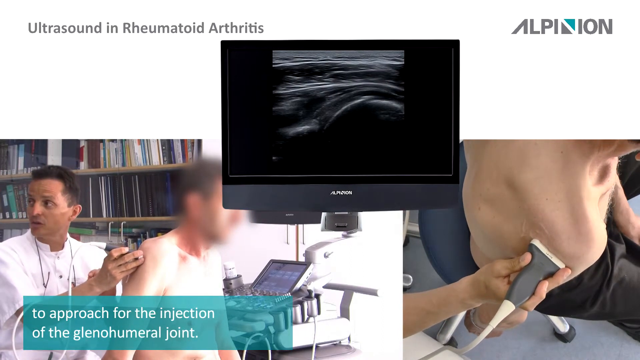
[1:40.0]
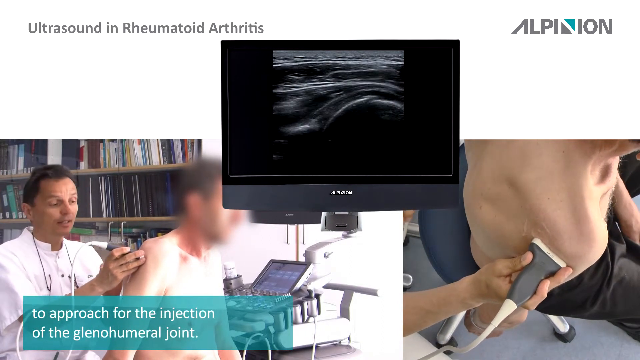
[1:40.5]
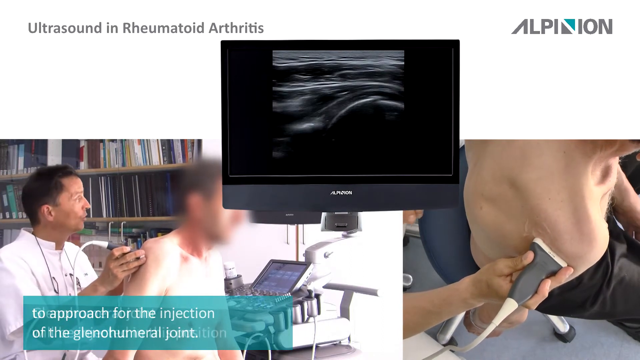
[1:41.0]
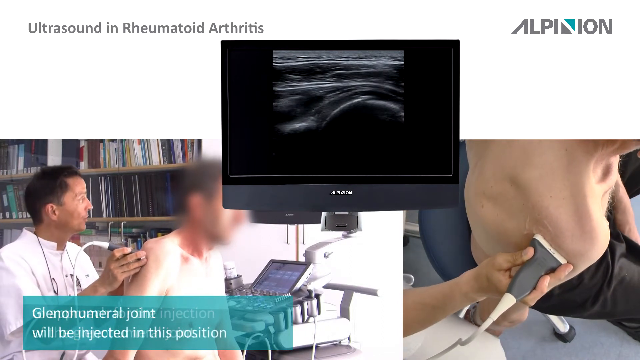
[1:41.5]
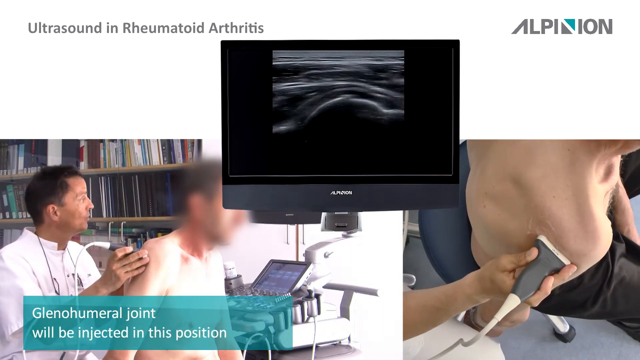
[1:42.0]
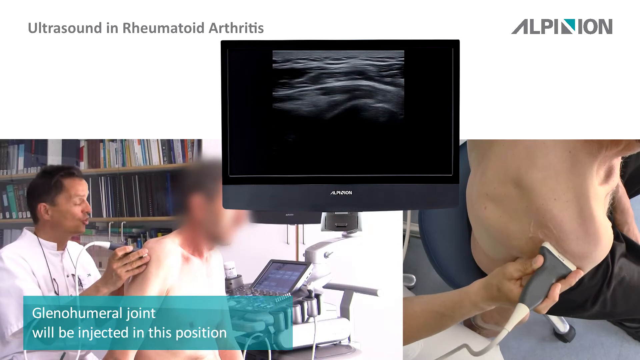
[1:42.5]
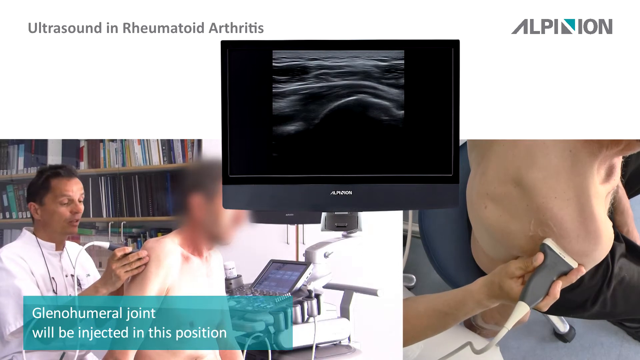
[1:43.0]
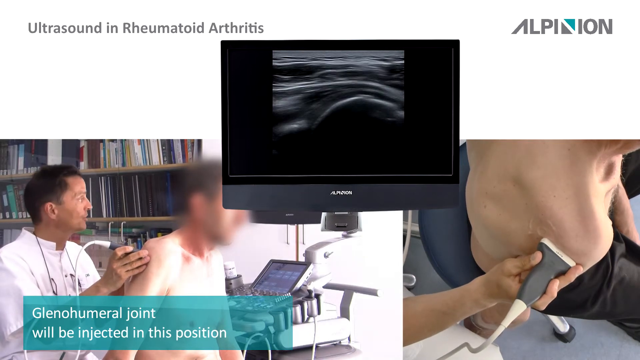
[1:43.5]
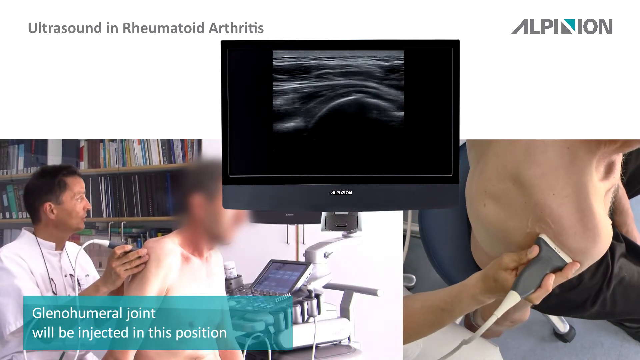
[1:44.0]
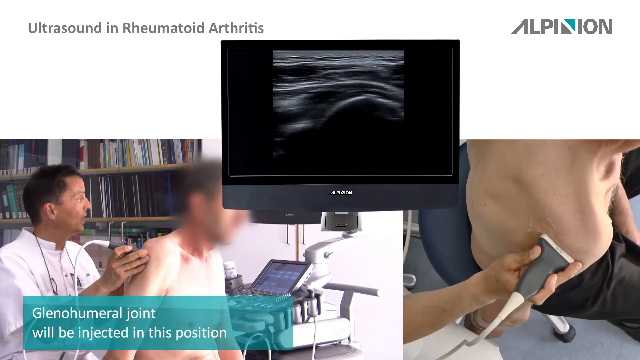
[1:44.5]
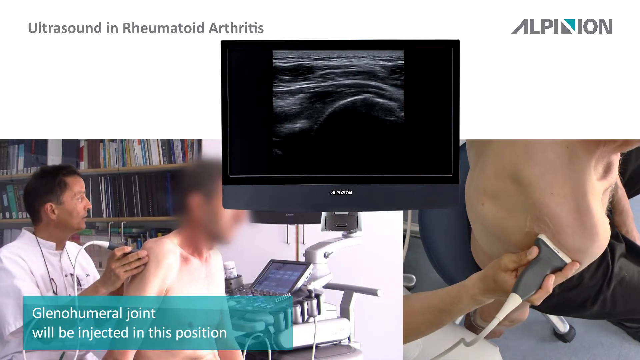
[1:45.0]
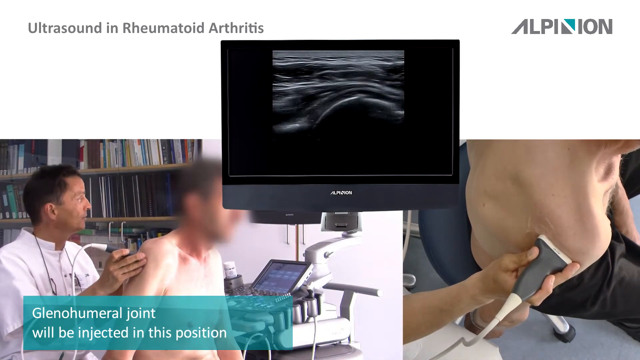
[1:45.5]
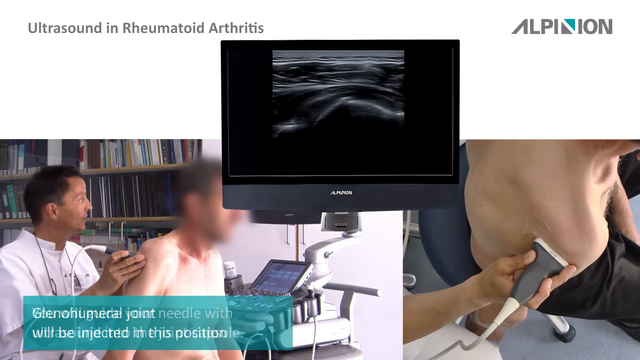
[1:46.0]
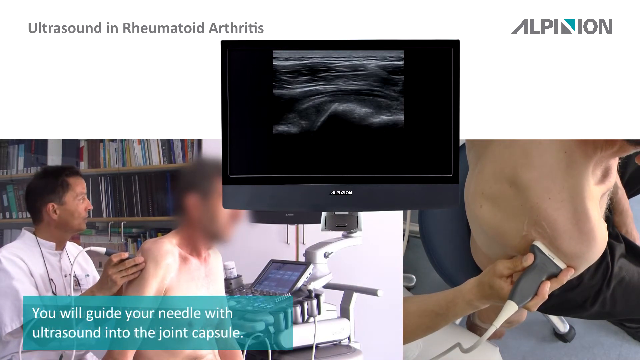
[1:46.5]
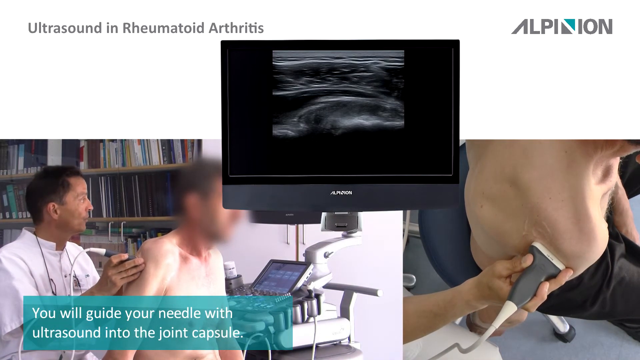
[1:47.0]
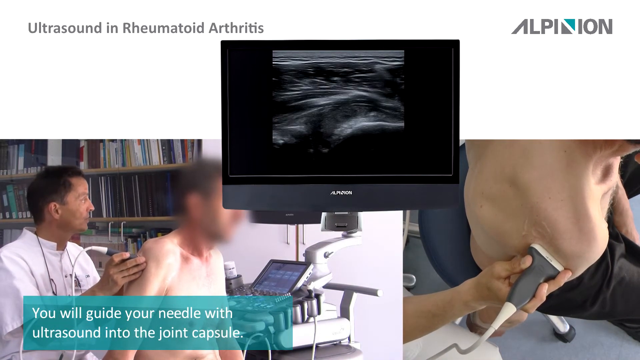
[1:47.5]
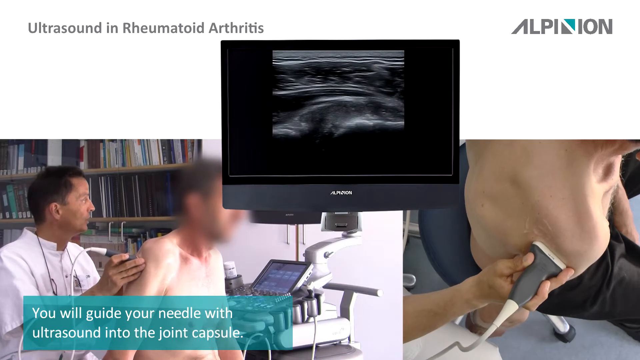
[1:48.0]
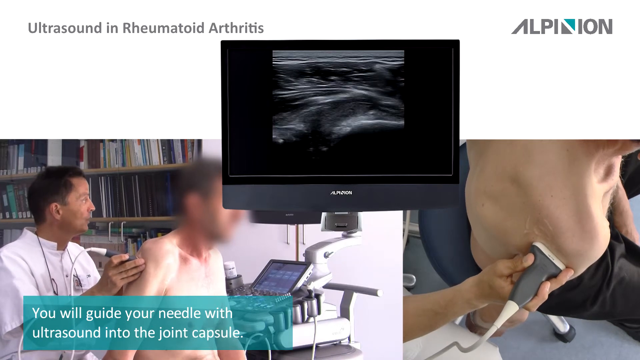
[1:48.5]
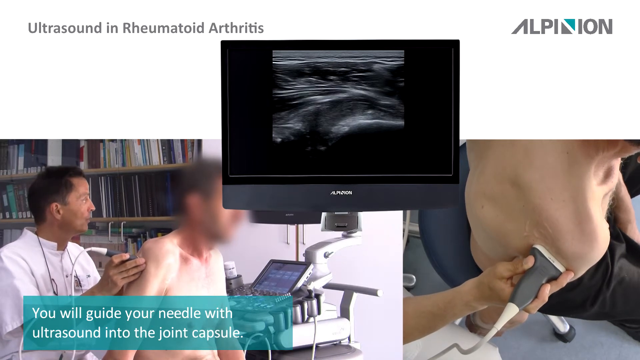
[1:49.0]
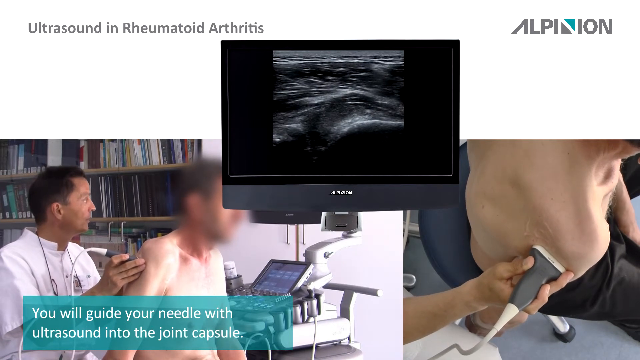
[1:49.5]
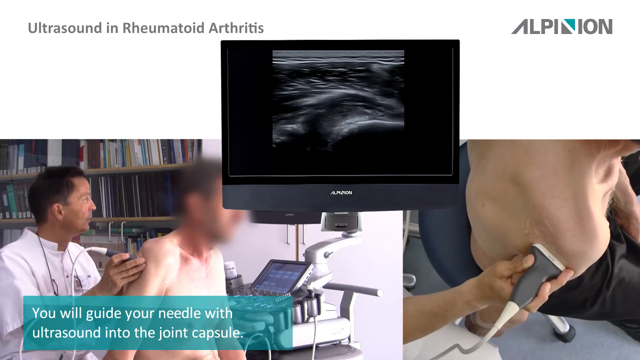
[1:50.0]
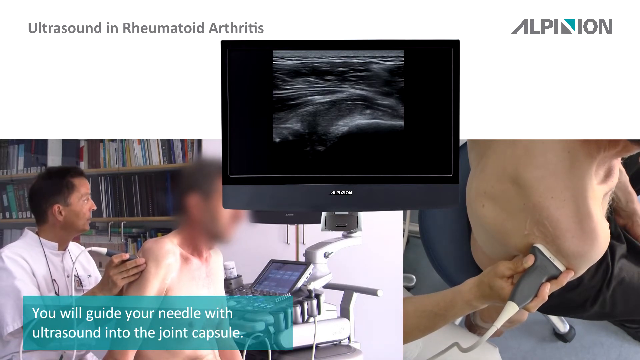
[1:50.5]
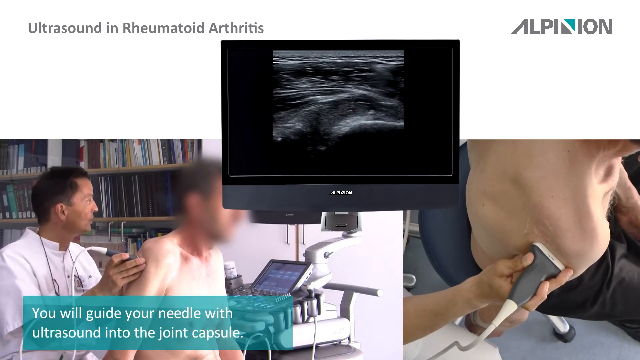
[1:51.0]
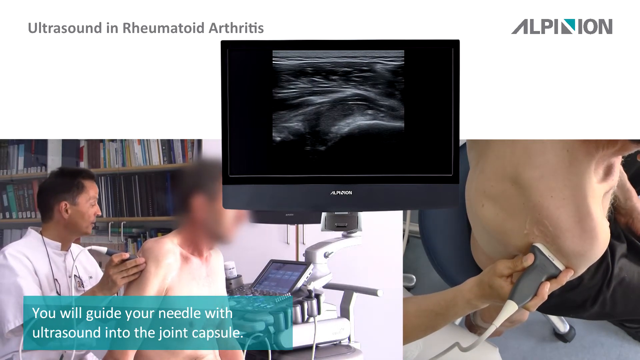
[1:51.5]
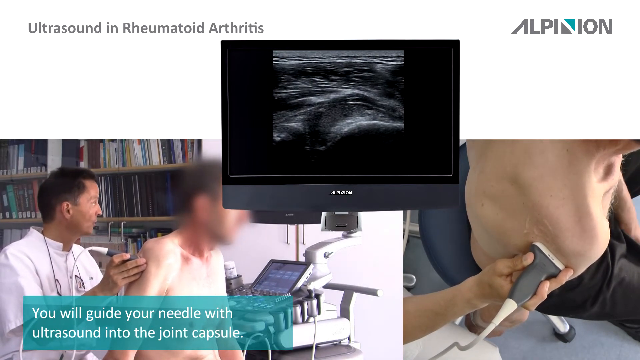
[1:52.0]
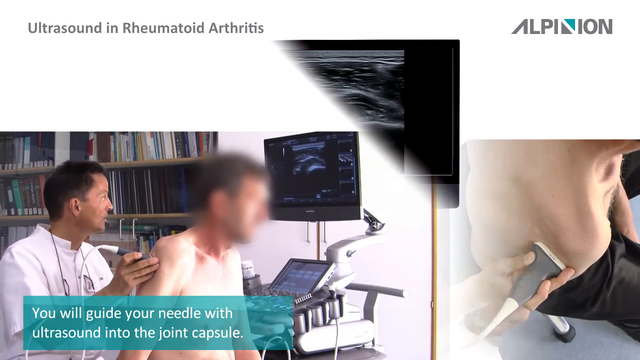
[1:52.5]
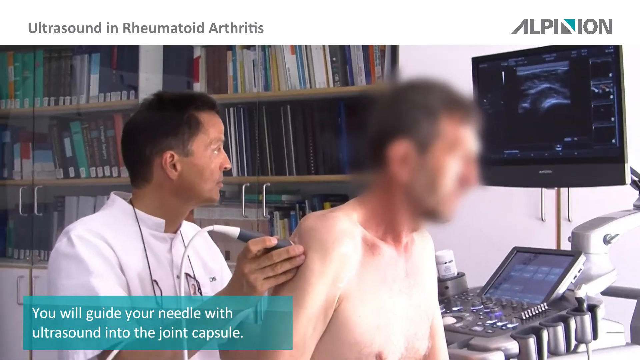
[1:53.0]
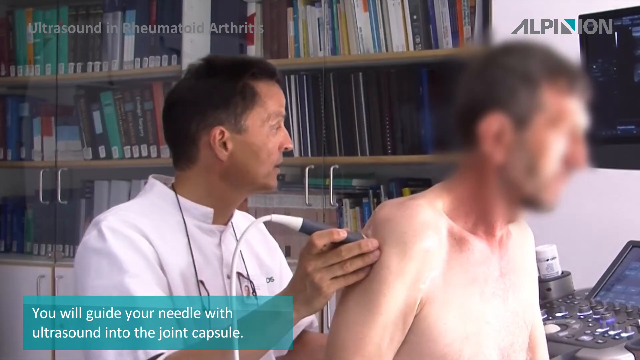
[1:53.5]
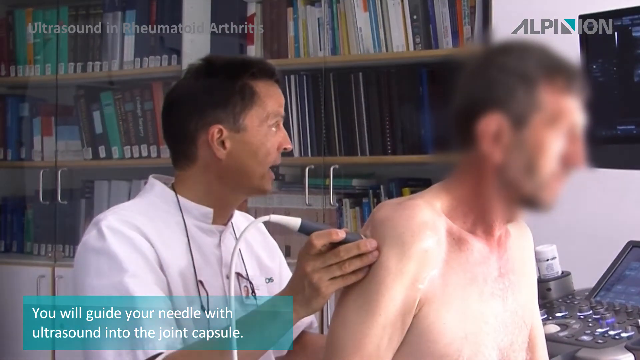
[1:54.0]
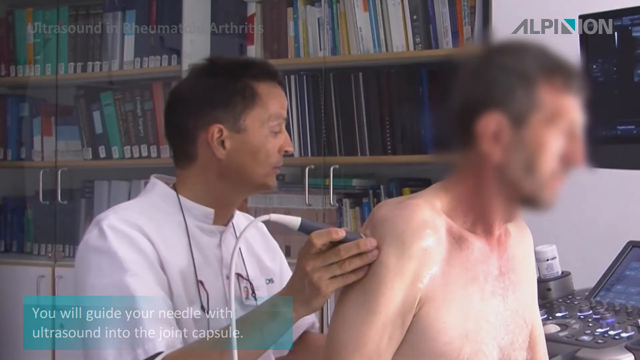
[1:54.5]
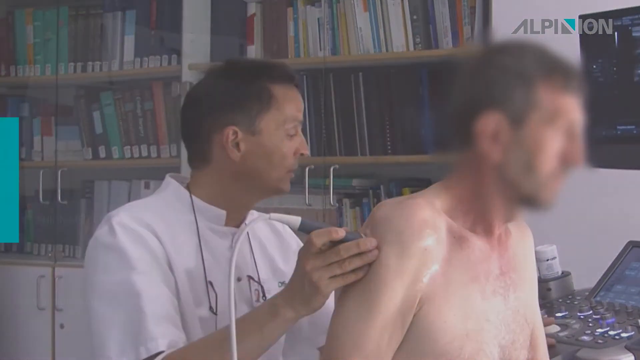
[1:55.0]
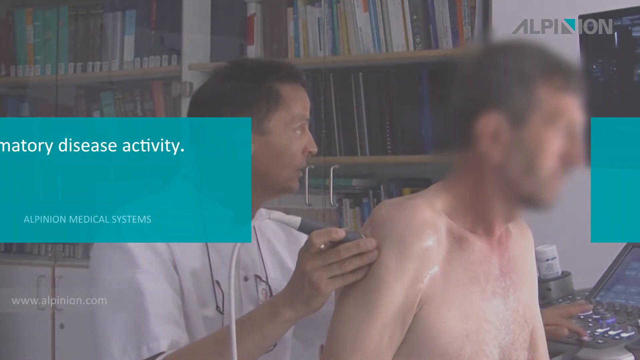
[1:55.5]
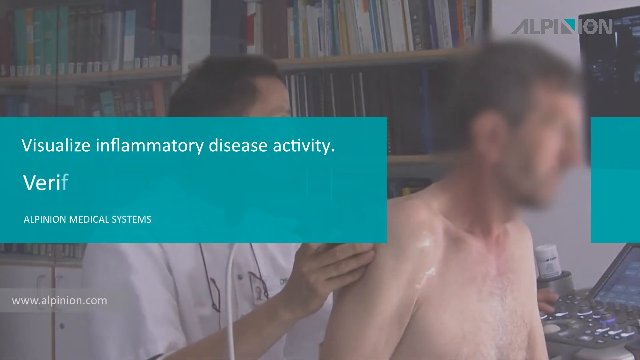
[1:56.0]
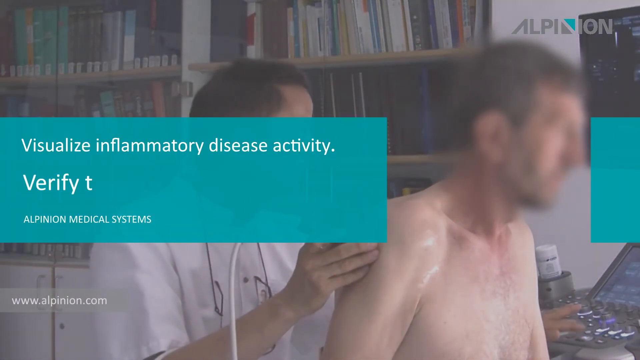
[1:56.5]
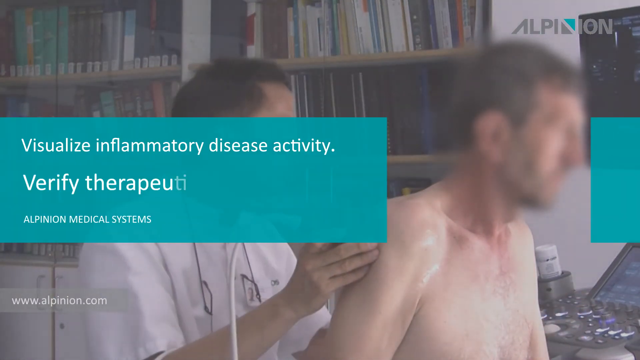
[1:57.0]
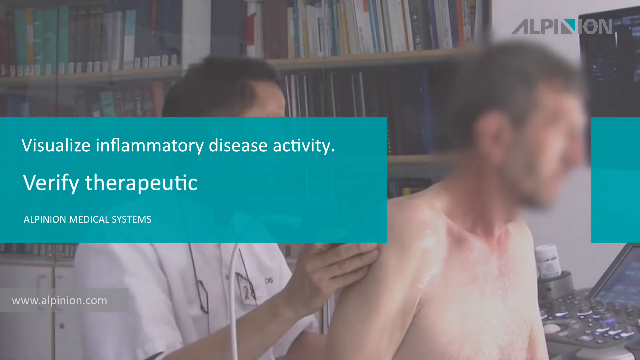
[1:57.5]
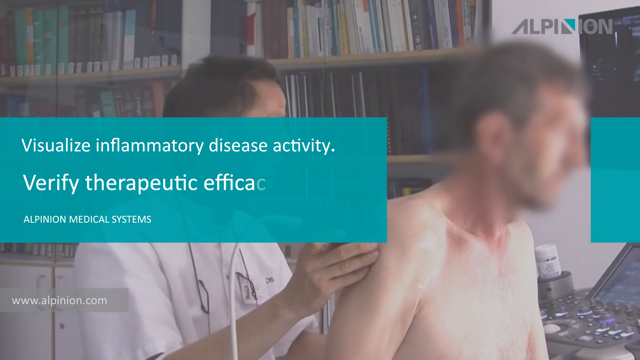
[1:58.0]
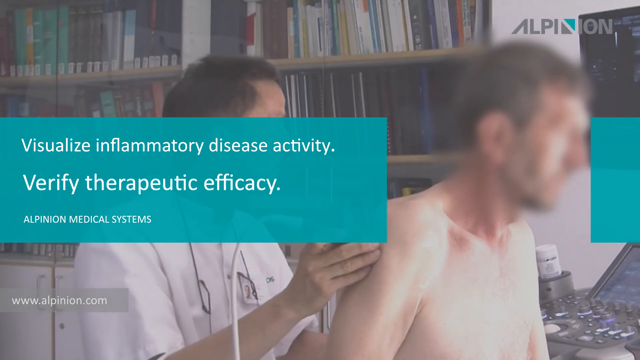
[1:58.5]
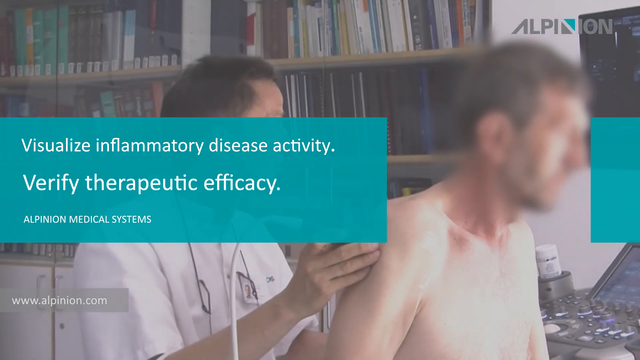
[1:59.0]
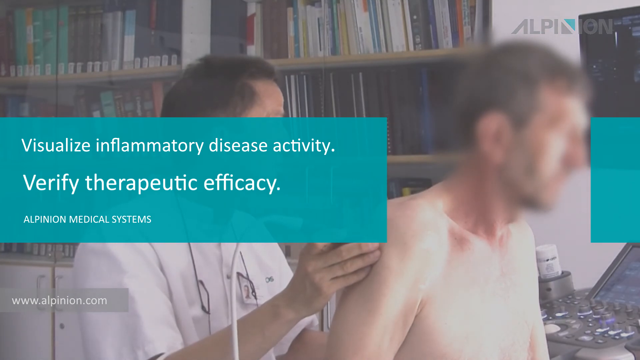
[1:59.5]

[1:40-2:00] Text on the right-hand side of the screen reads: "glenohumeral joint will be injected in this position. You will guide your needle with ultrasound into the joint capsule." The video ends with text recapping its topic: "visual inflammatory disease activity verify therapeutic efficiency Alpinion medical systems", along with the website "www.alpinion.com". The patient does not seem to be in any discomfort or pain, and the doctor works slowly and carefully. The doctor is a man in a full white lab coat, with what appear to be glasses around his neck and a lanyard with his identification, presumably including a name tag.